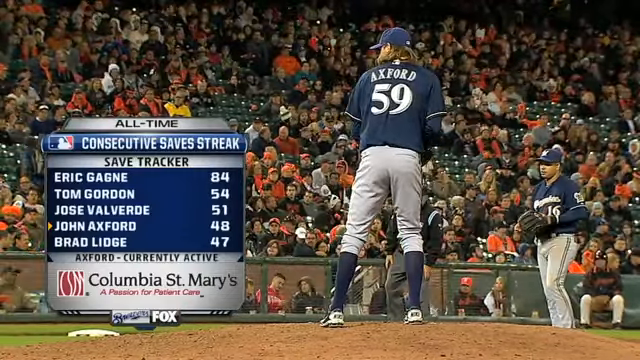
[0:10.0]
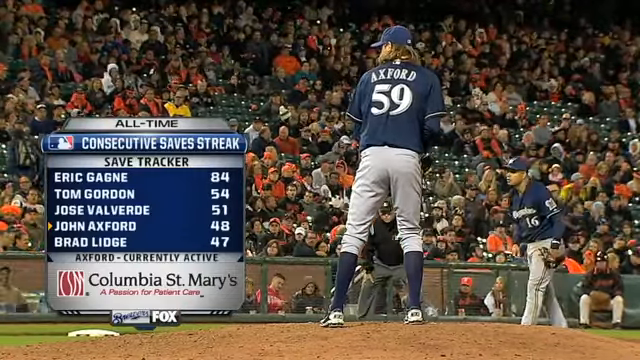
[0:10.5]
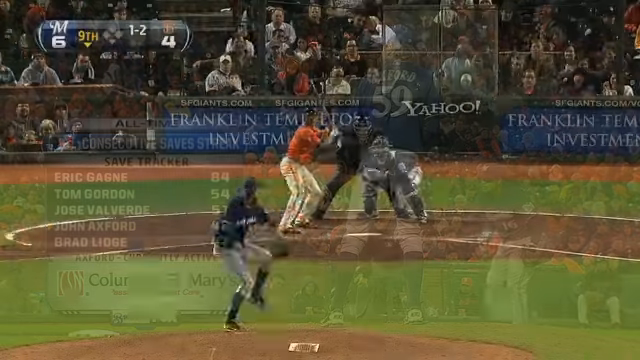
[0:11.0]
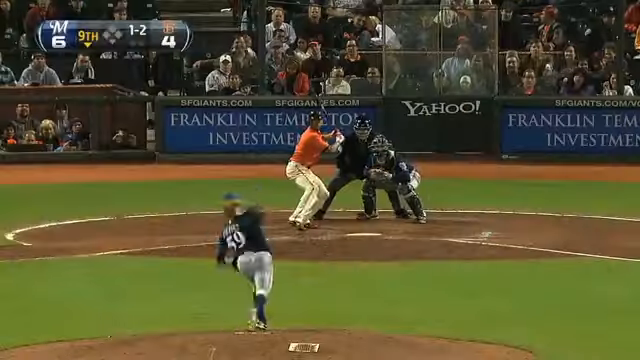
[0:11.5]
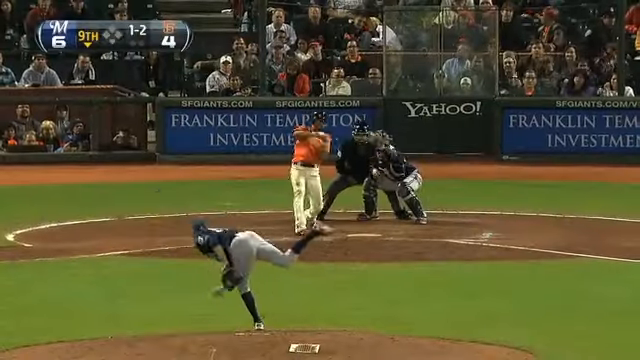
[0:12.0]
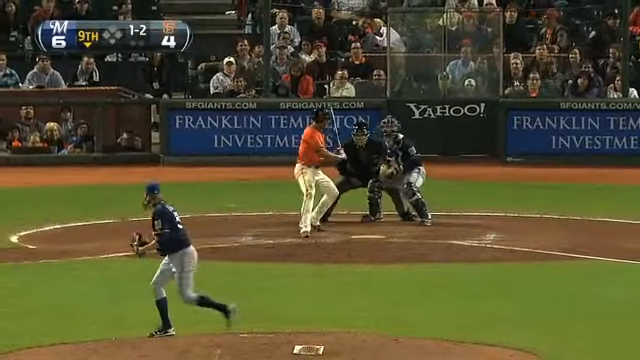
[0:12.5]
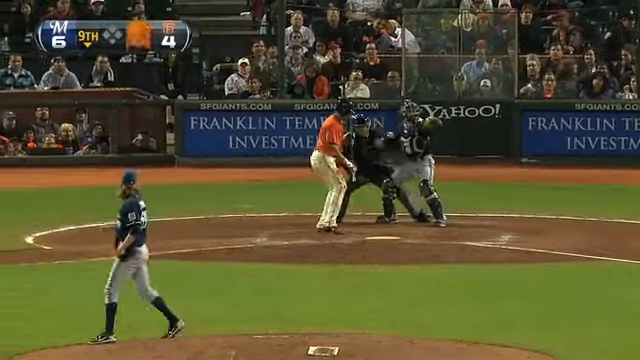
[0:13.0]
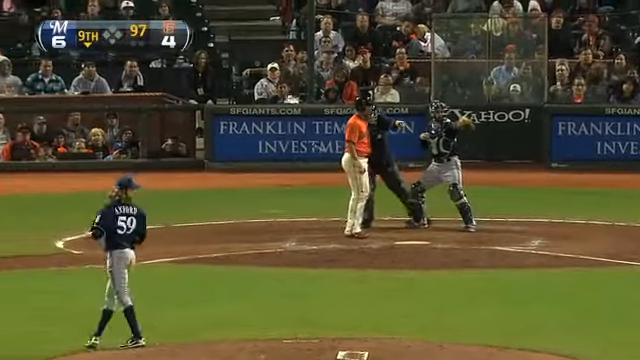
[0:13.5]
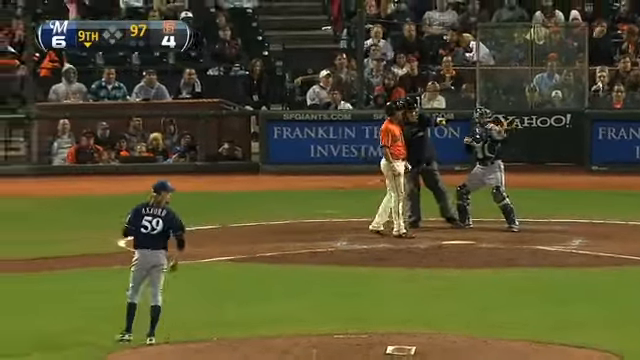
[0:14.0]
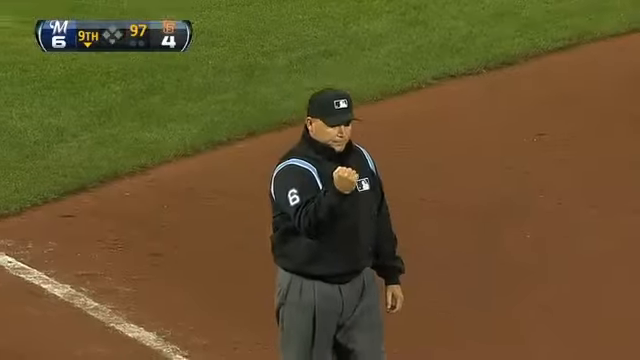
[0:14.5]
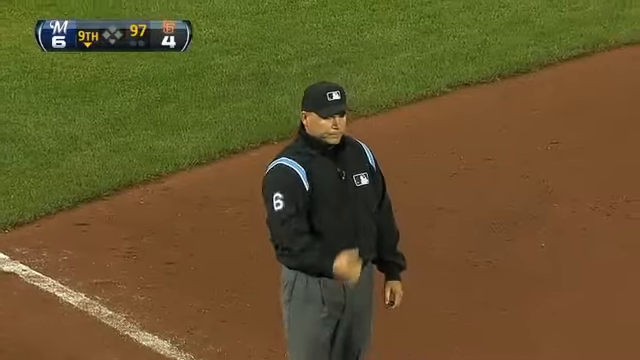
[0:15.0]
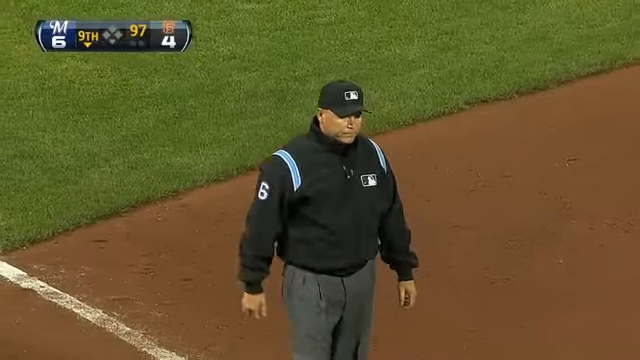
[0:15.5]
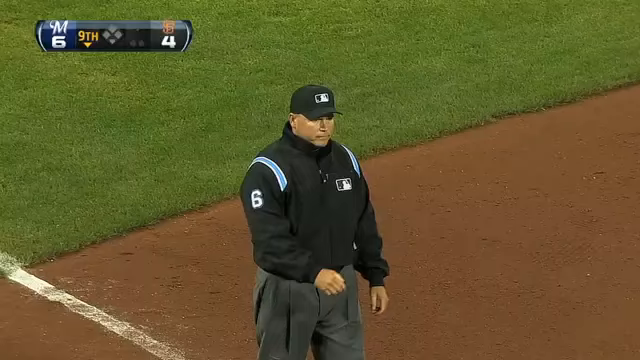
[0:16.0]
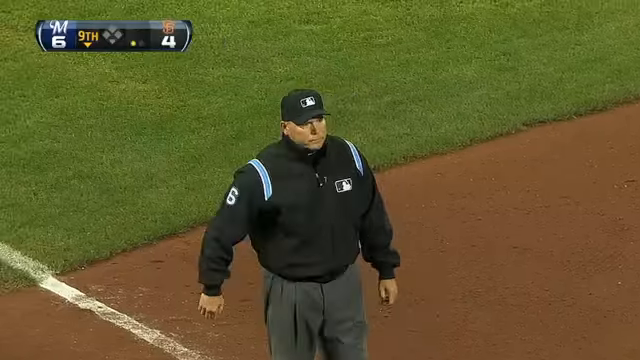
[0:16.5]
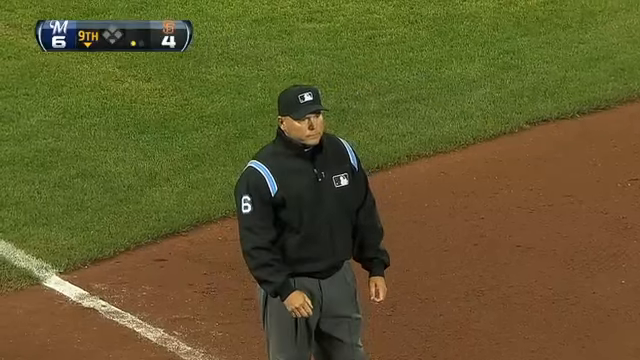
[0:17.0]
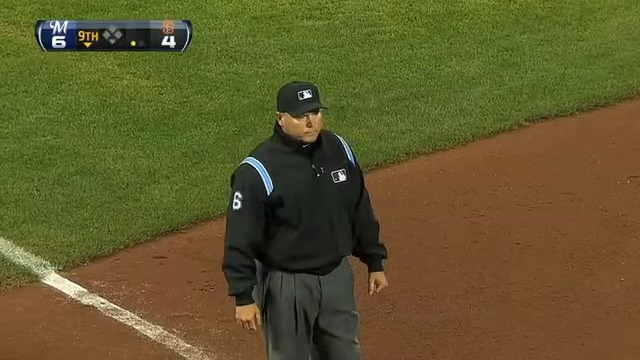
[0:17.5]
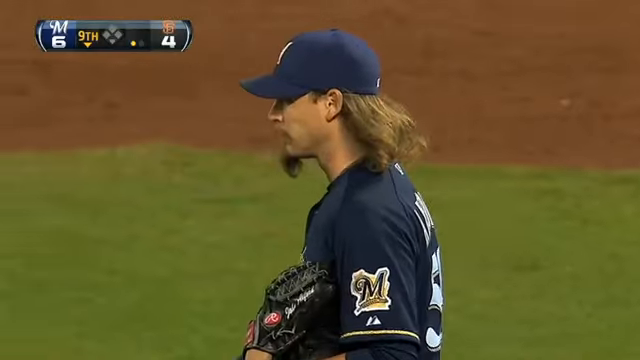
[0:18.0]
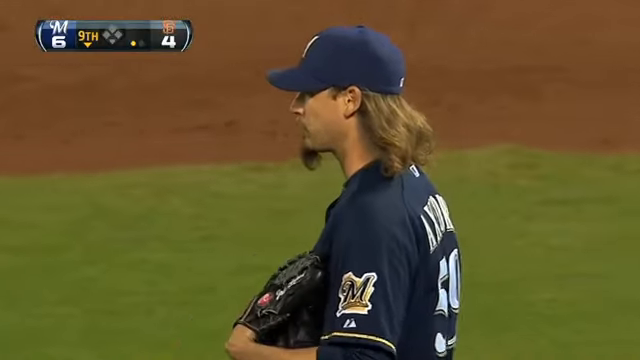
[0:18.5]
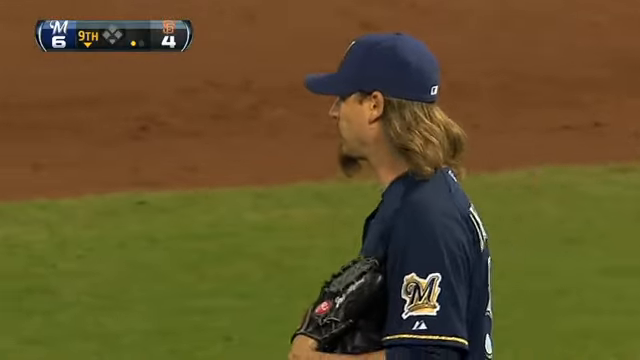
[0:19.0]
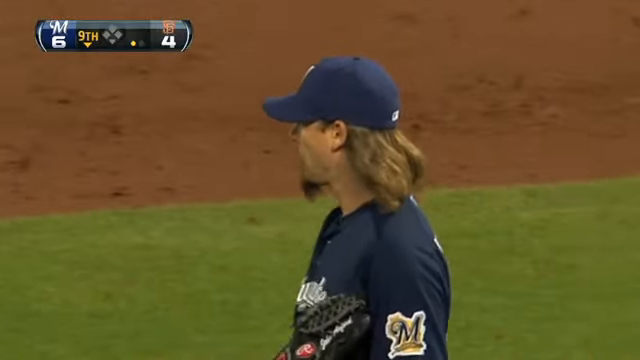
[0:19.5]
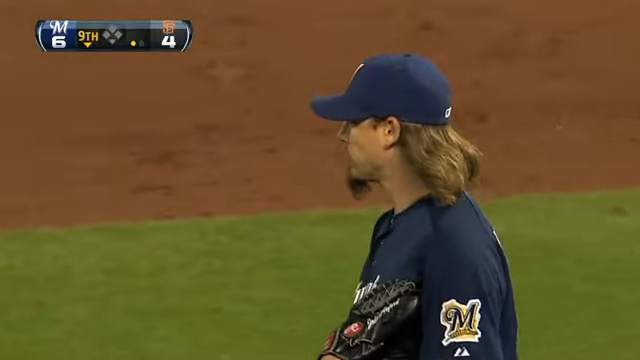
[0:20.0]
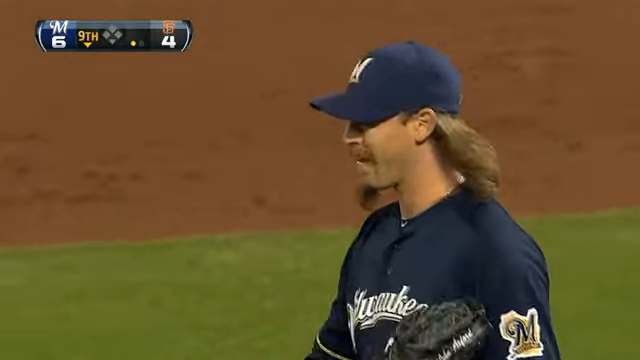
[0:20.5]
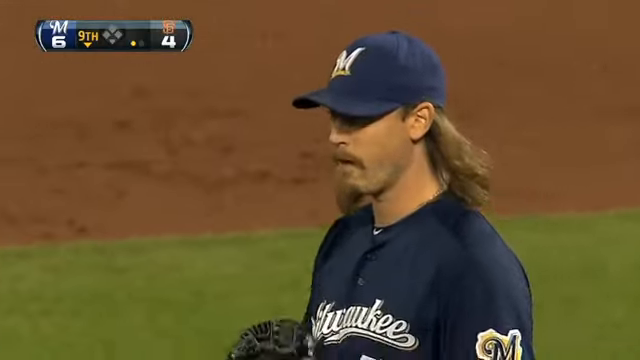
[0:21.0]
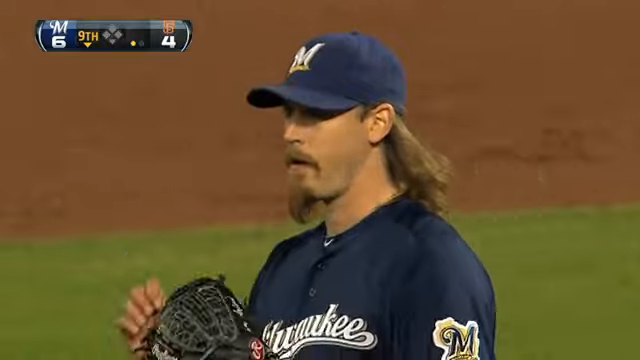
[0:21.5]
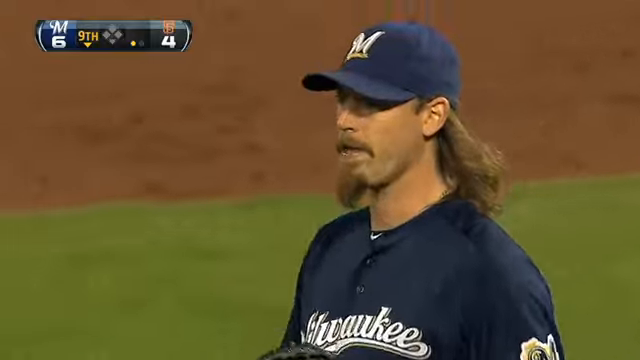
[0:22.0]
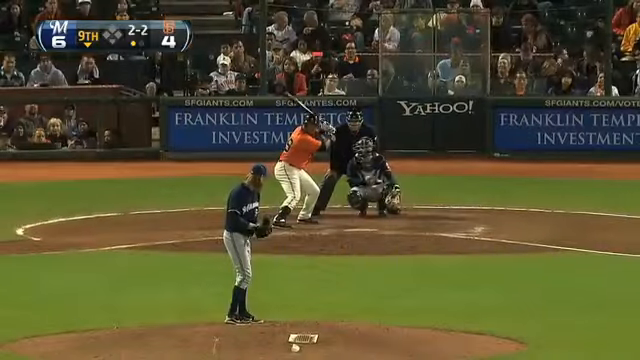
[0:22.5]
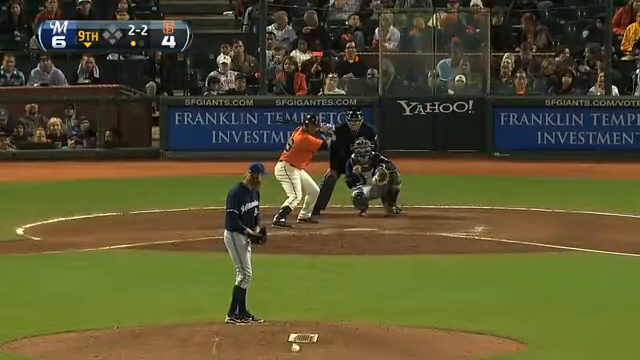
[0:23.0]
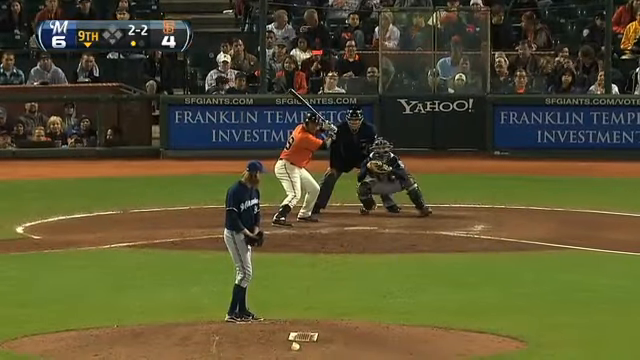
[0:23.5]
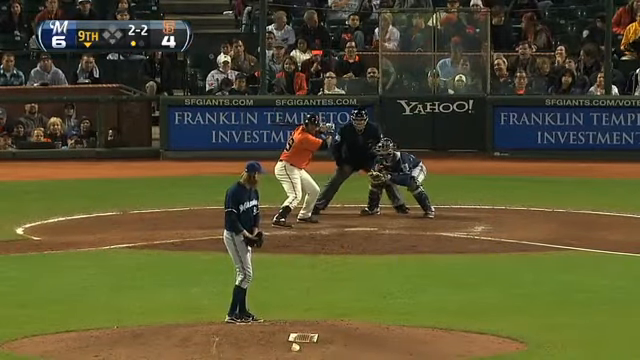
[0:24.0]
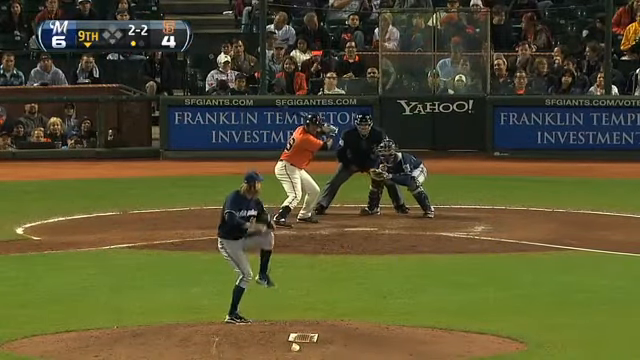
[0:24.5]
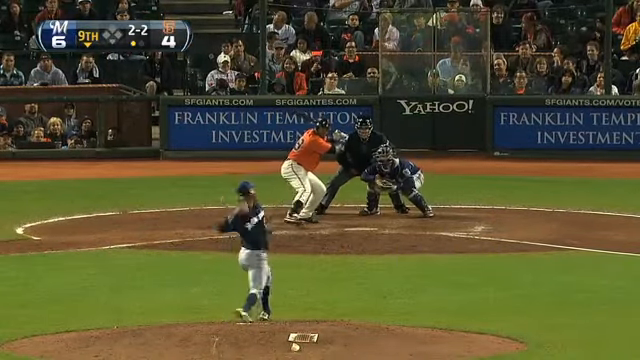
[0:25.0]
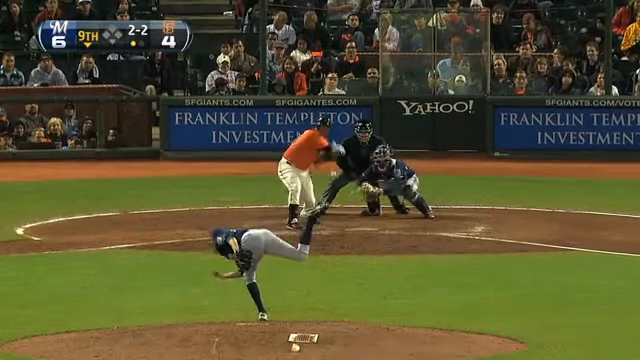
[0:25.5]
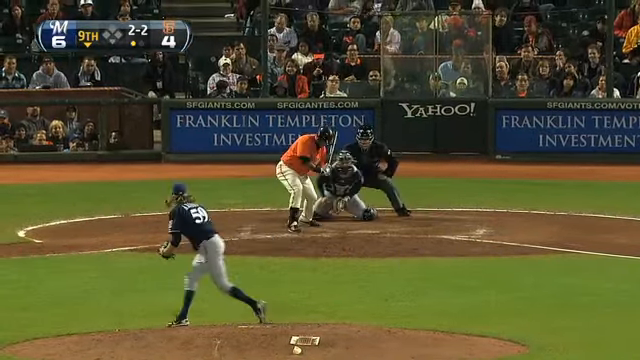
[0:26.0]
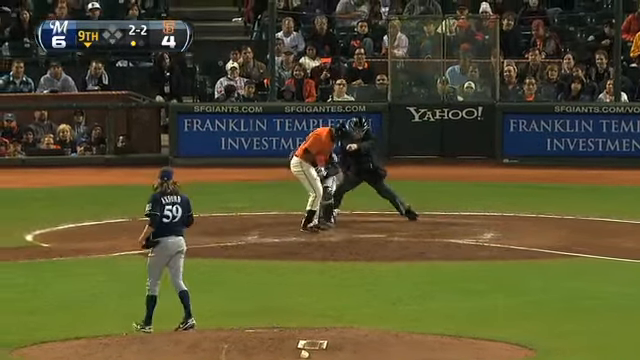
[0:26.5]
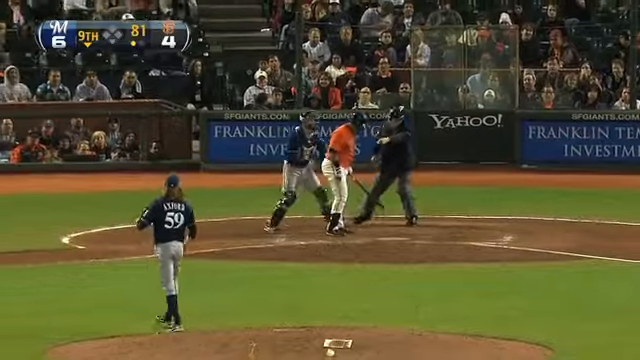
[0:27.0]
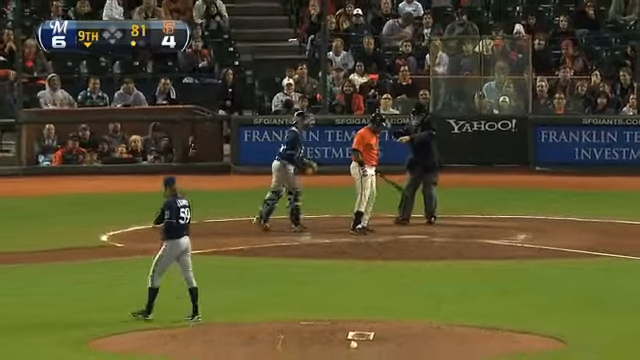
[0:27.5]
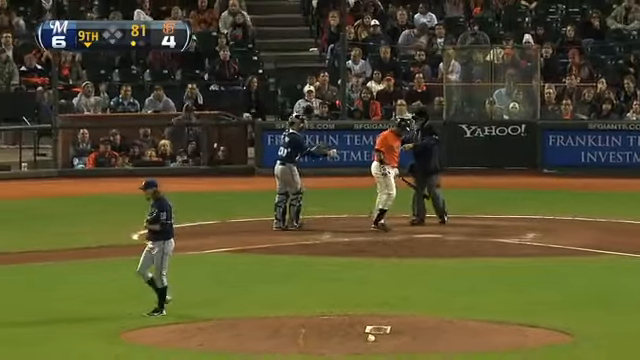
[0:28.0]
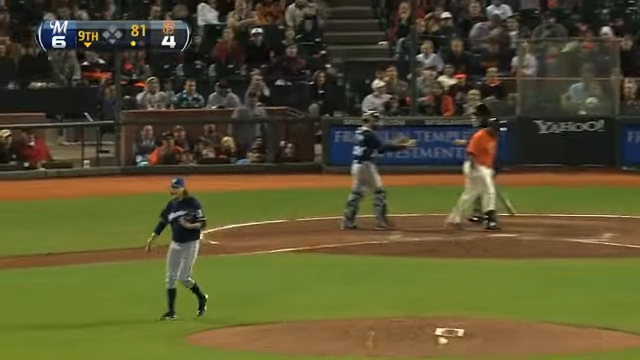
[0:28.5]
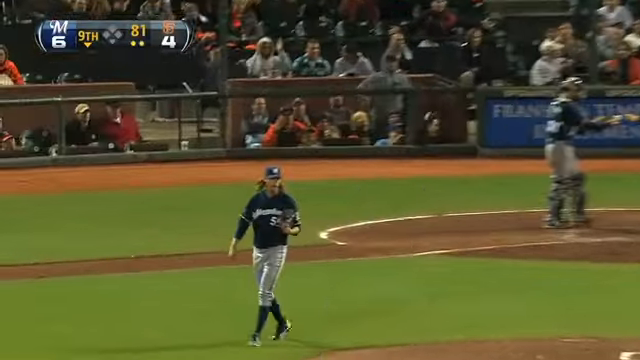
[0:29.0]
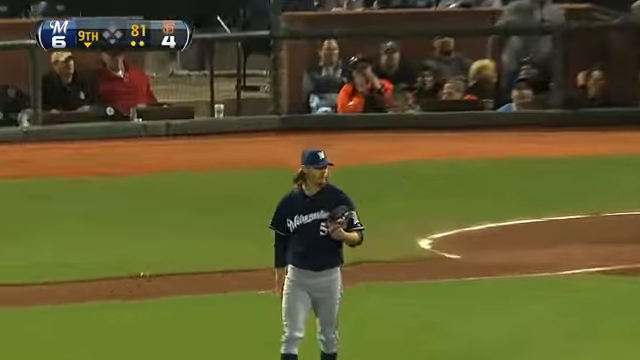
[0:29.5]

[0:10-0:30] Axford, number 59, prepares to throw a pitch. The camera angle changes to gameplay footage from behind the pitcher's mound, in what looks like a game between the San Francisco Giants and possibly the Miami Marlins or the Seattle Mariners. A Giants batter in an orange baseball jersey is up to bat. Axford throws, the batter swings, and right before he fully completes the swing the ball lands in the catcher's glove behind him; it looks like a strike, and the umpire raises his right fist. The camera then changes to a zoomed-in side view of Axford. It is the bottom of the ninth inning, and the score is six to four with the Marlins in front. Axford lifts his left leg and throws another pitch with his right hand; it is a ground ball, and he just about gets the batter to swing. The umpire makes a hand gesture with his left hand, and the camera zooms in on the pitcher.